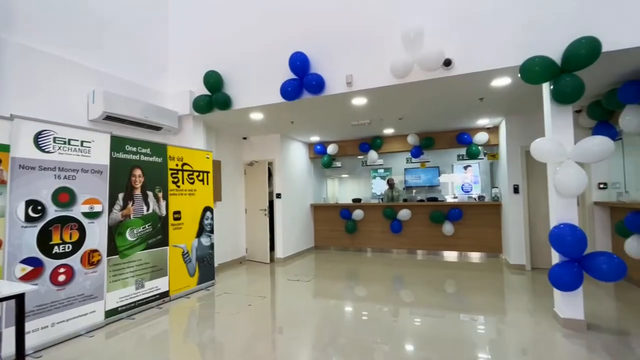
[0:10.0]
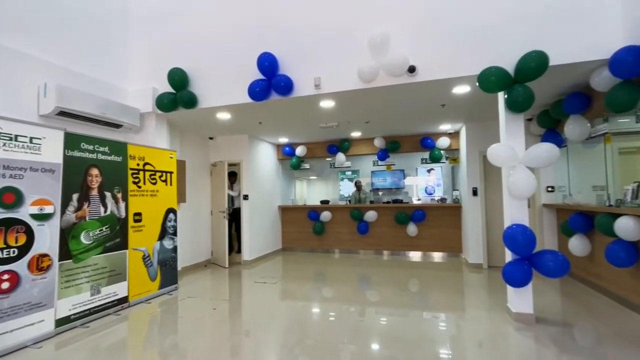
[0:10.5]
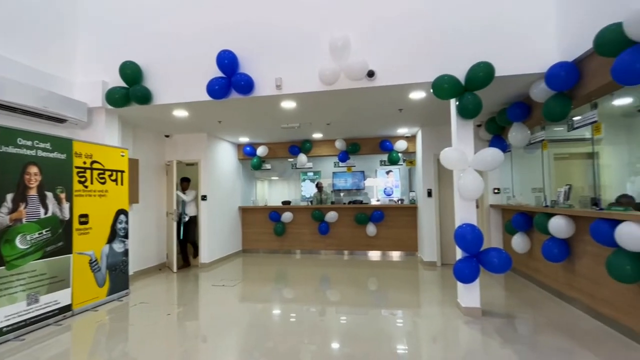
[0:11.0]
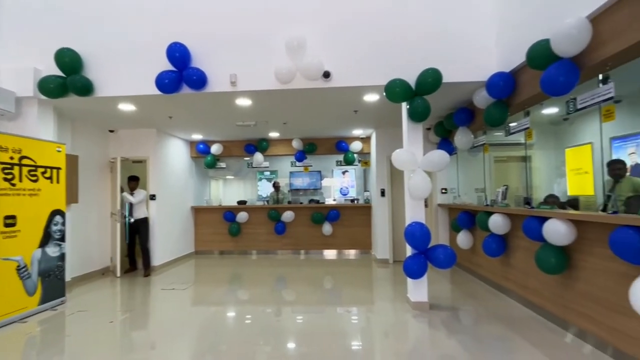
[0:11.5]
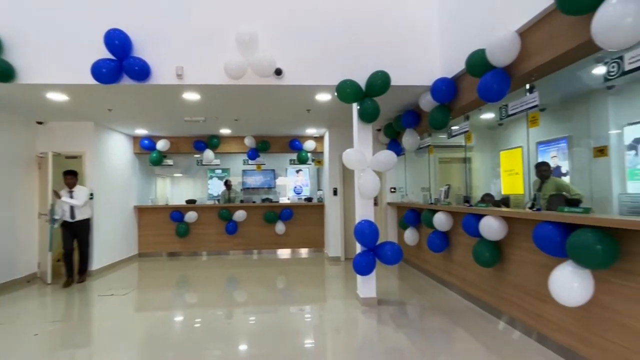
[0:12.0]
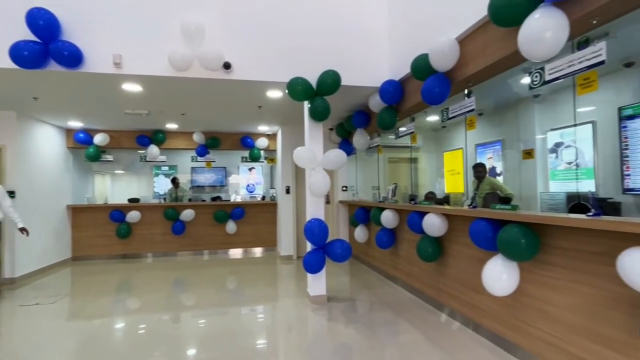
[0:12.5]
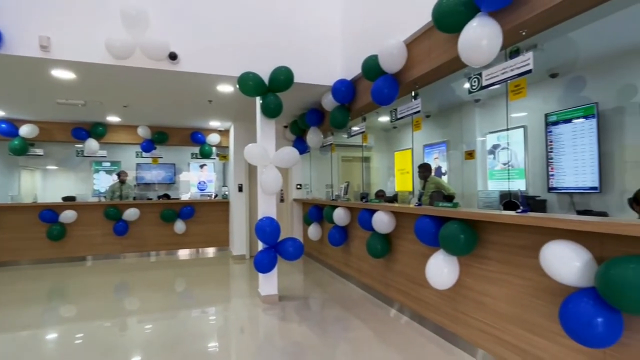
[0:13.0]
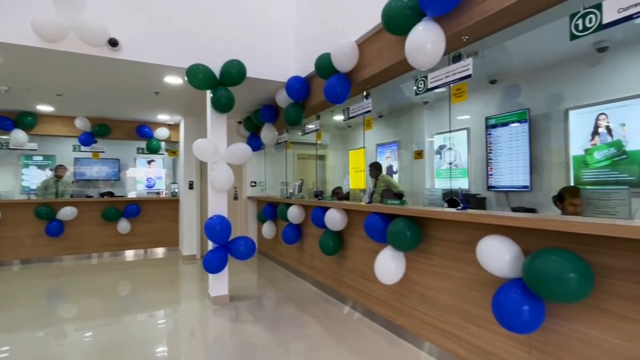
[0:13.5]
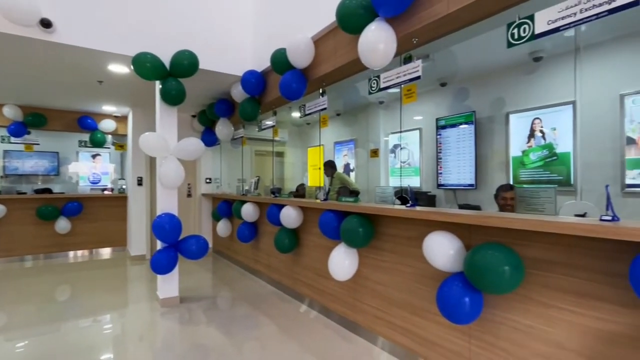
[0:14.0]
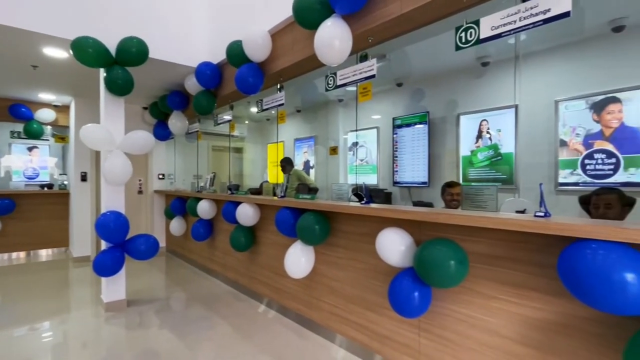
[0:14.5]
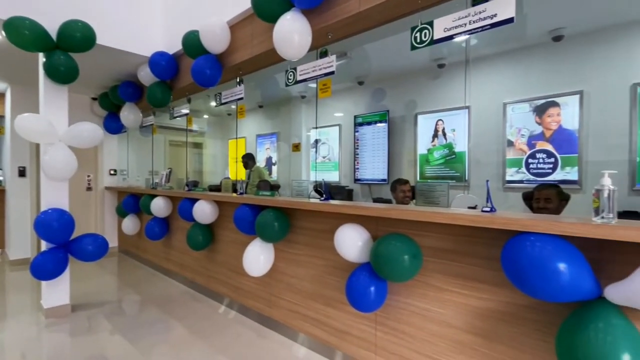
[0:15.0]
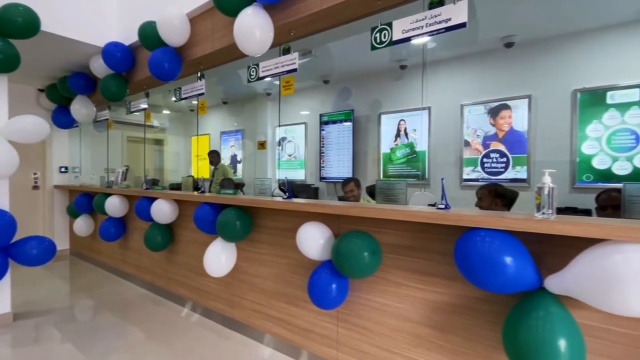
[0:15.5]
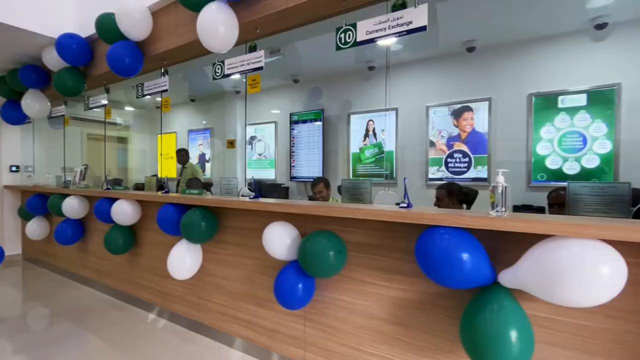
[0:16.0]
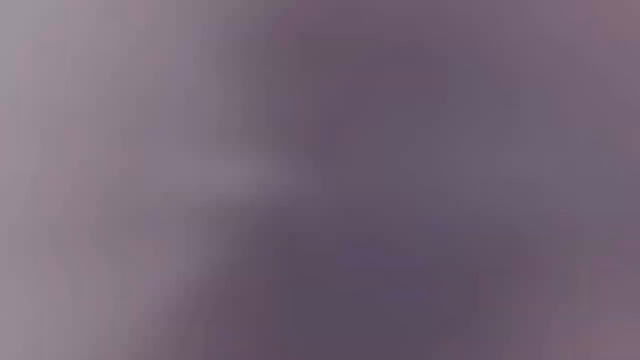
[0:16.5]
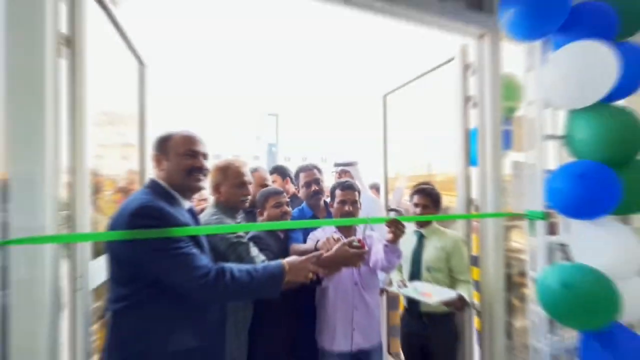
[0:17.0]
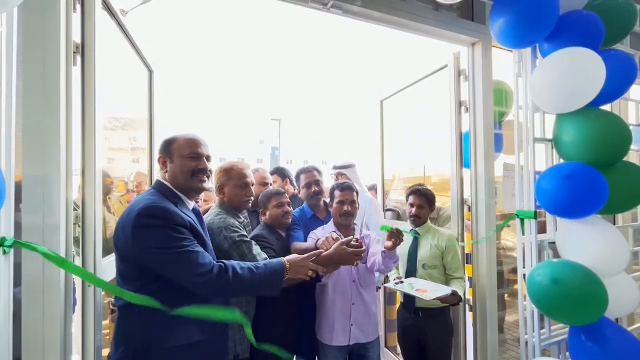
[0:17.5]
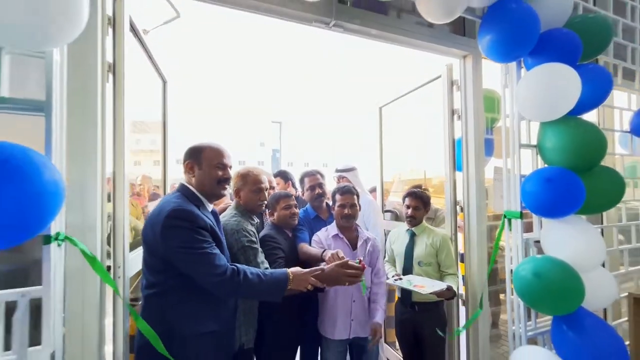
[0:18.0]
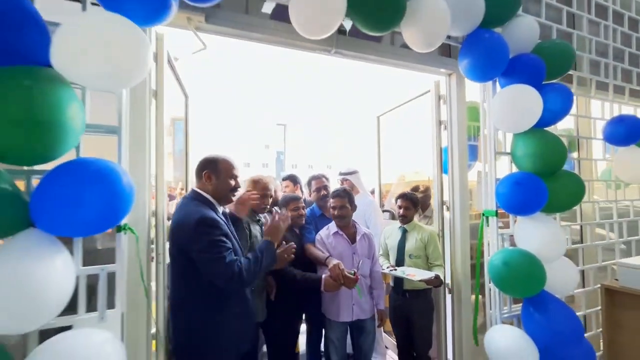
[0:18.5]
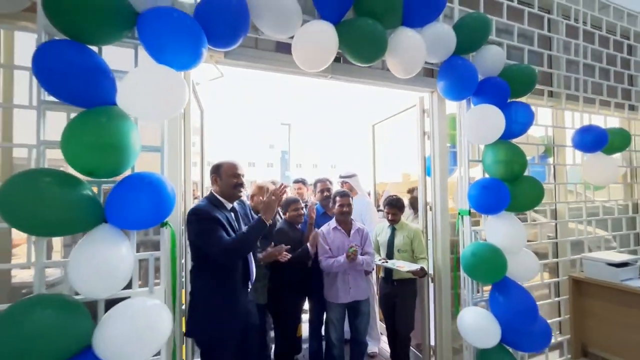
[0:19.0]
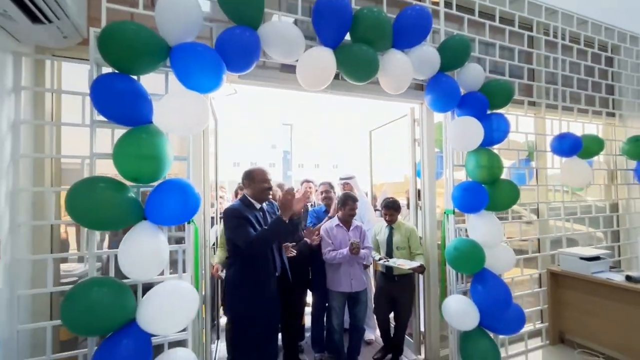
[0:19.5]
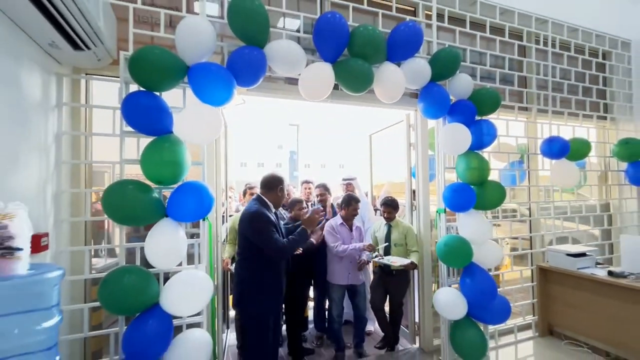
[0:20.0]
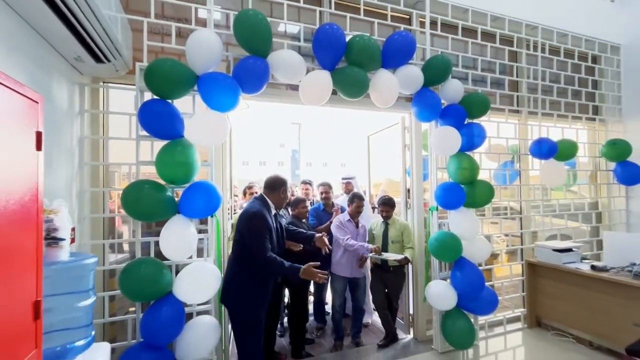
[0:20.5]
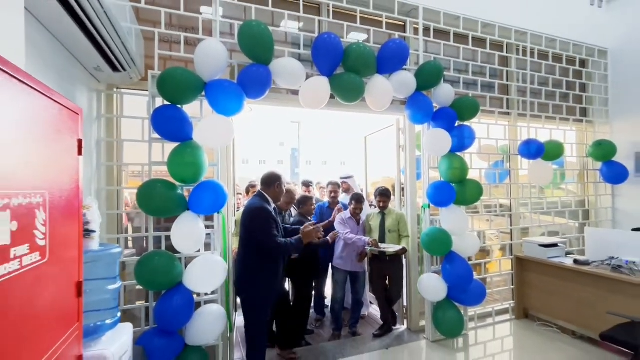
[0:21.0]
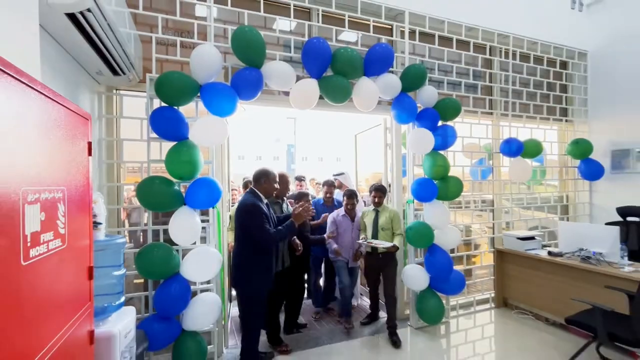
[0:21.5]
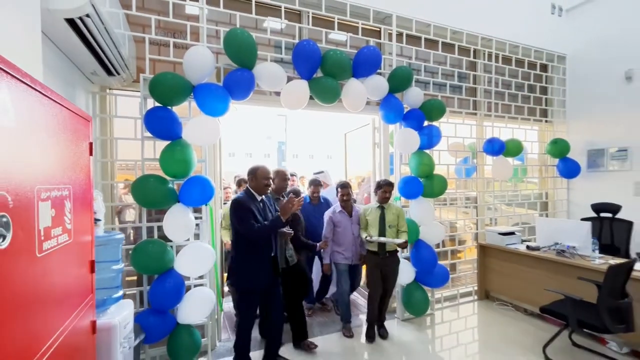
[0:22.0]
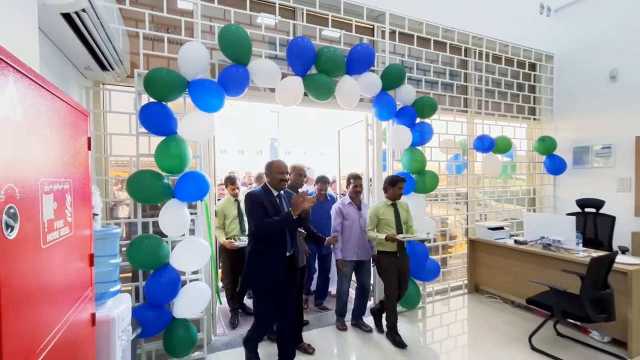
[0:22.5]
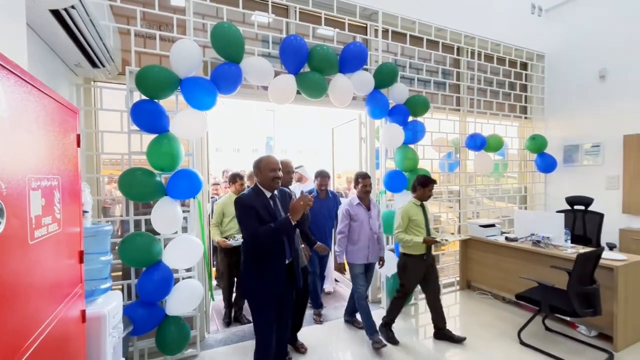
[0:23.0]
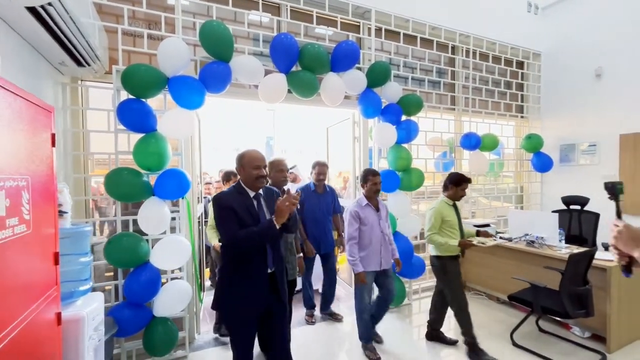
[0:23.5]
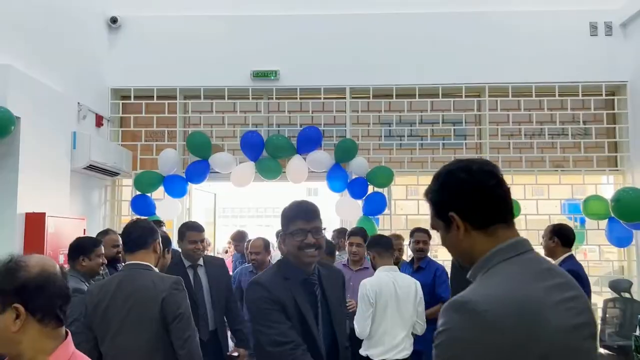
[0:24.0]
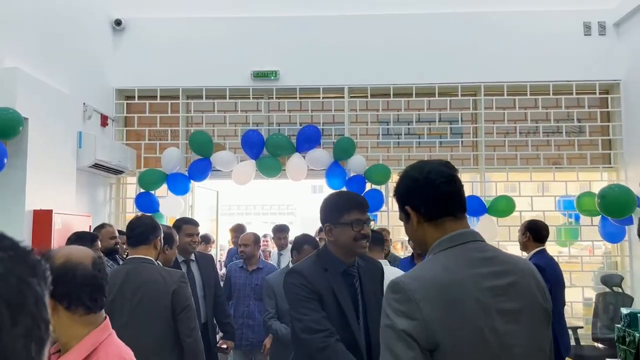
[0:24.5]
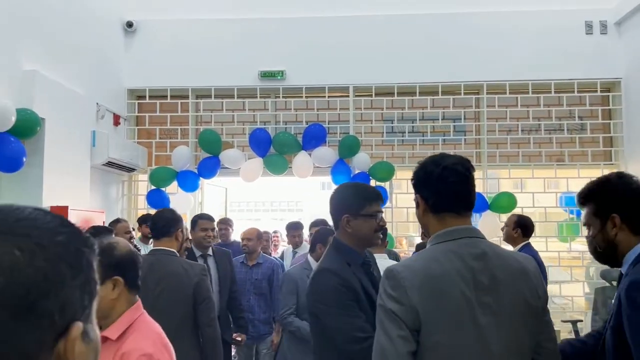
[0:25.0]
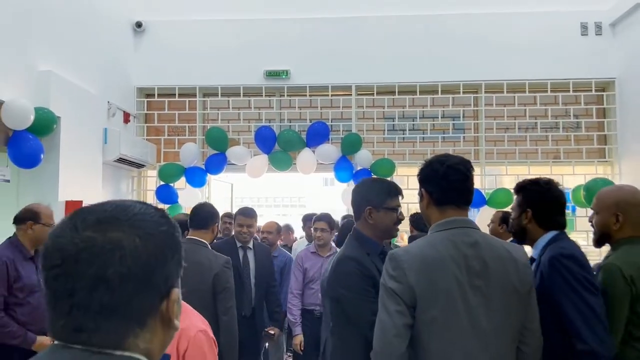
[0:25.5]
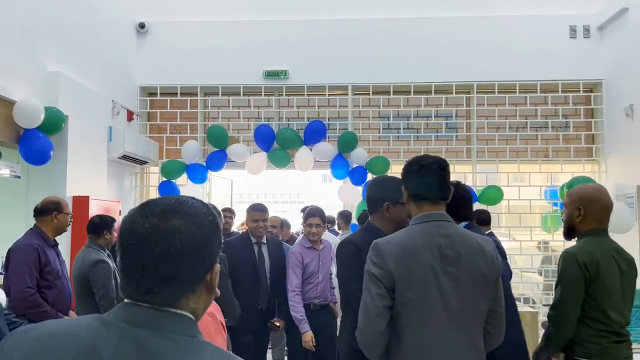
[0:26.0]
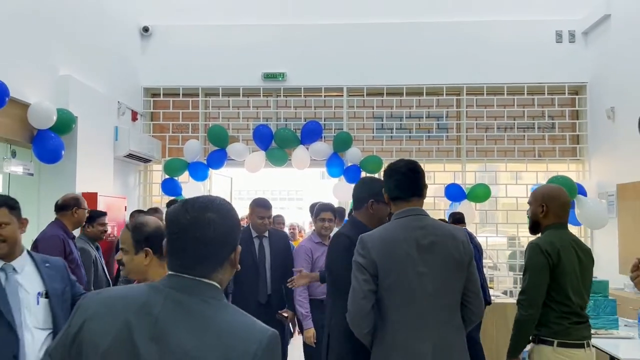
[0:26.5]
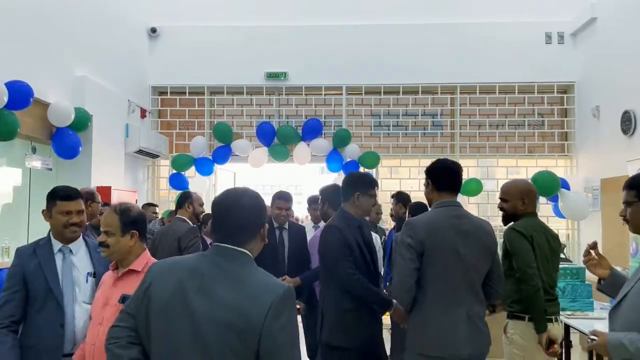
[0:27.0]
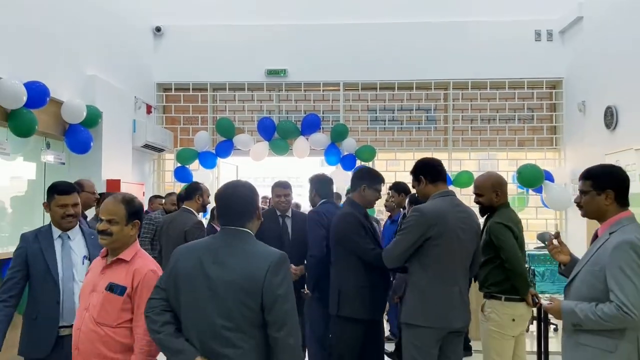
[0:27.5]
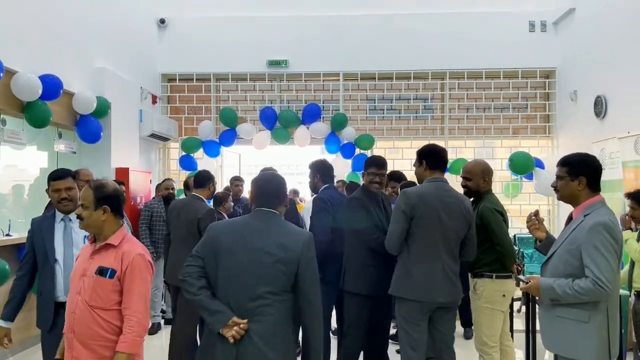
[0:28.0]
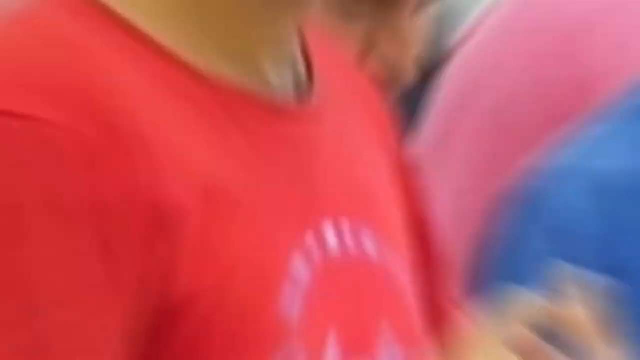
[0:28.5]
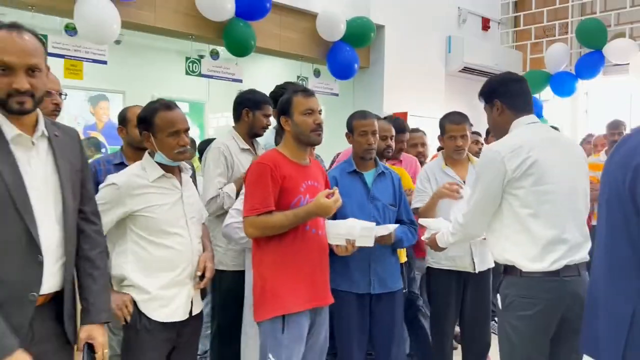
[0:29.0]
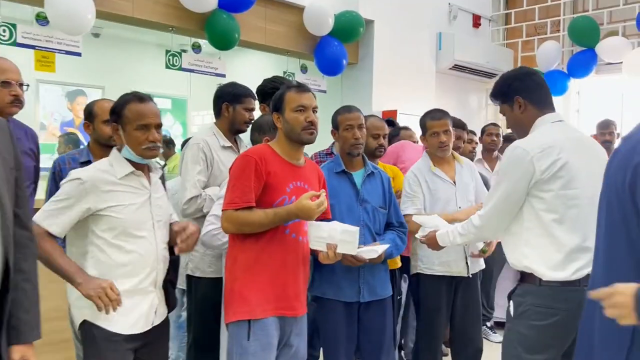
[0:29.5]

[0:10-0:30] Inside the store, the camera slowly pans to the right. A man in a white suit and black pants goes through a door on the left of the screen, and clerks are also visible. Many green, blue and white balloons are decorated everywhere inside the store. The video cuts to what looks like a grand opening: someone in a blue suit, maybe a mayor, holds scissors, about to cut a green tape. They cut the tape and everyone applauds; it seems the store is opening for the first time, and customers go in. There are many people in the store, many of them in suits. The camera cuts to a man in a red shirt eating something, and it looks like a party, with a lot of people celebrating the opening.